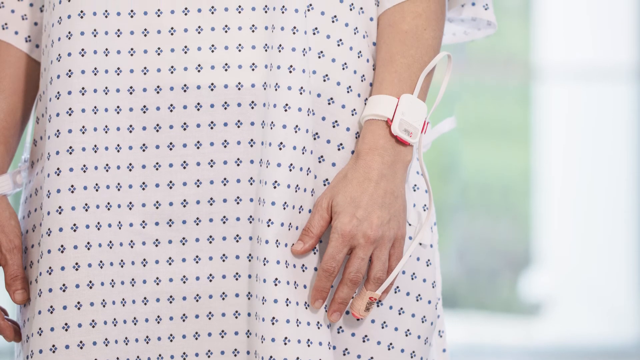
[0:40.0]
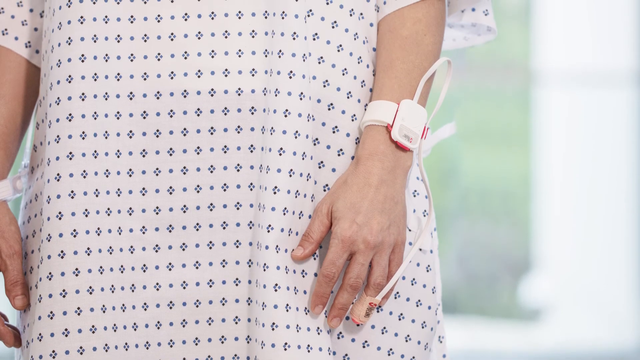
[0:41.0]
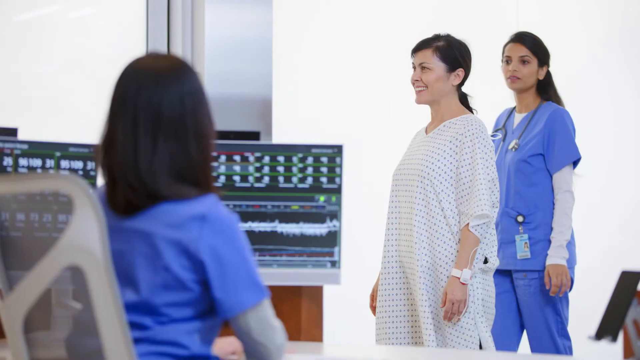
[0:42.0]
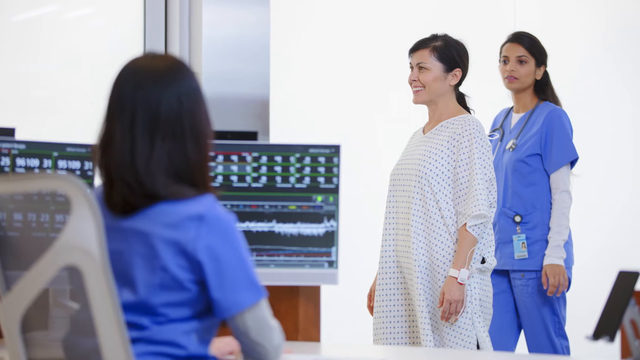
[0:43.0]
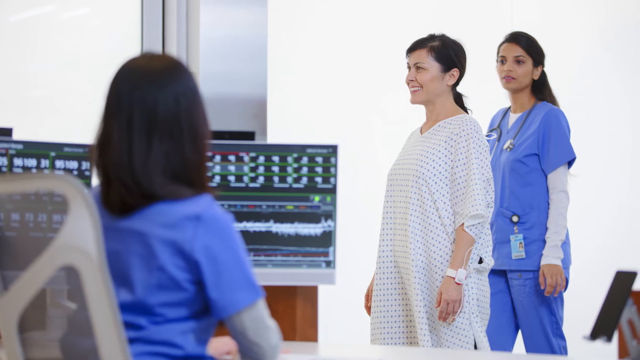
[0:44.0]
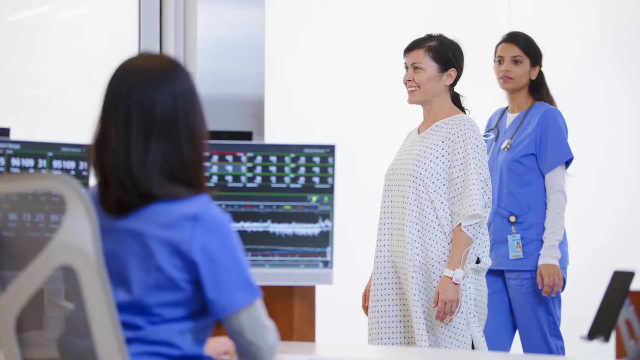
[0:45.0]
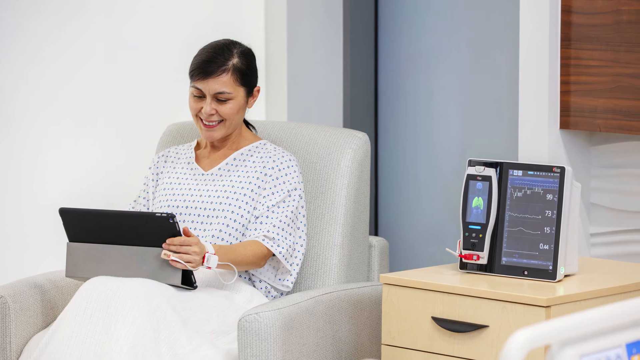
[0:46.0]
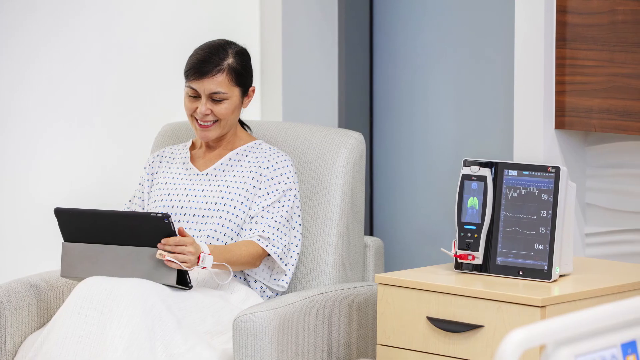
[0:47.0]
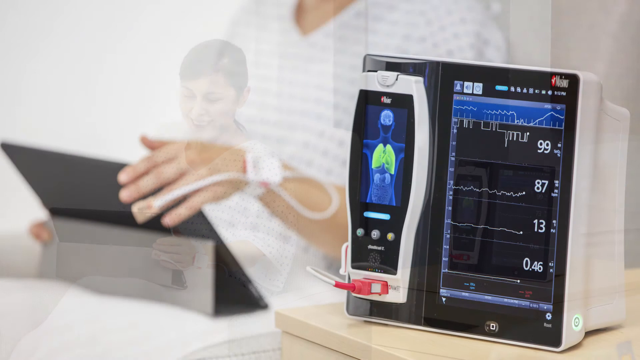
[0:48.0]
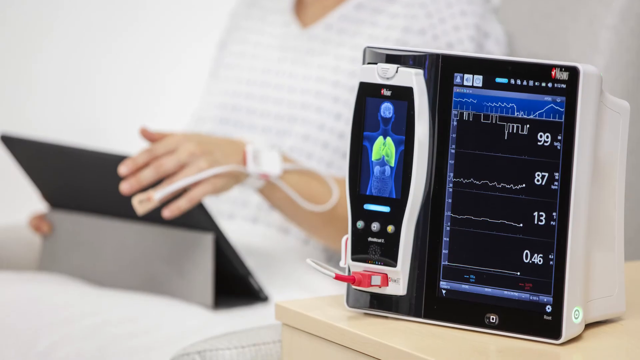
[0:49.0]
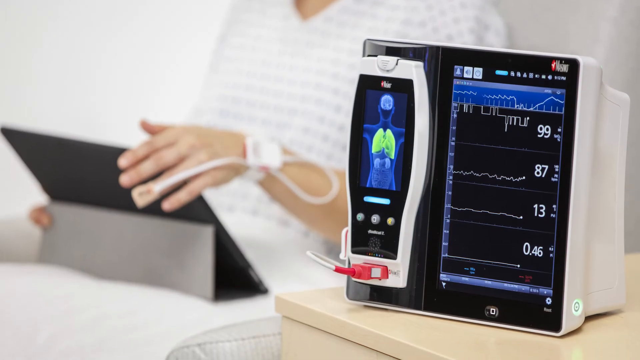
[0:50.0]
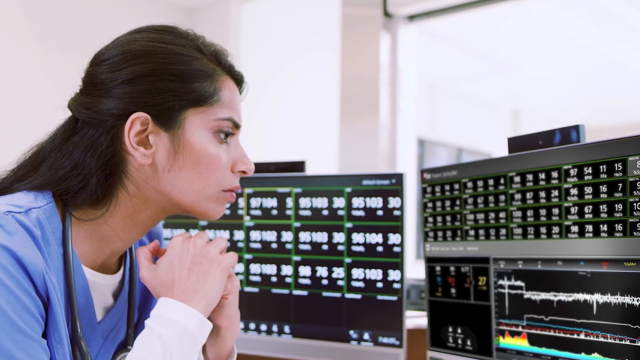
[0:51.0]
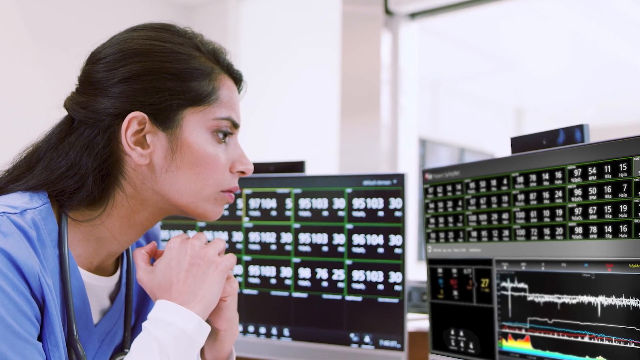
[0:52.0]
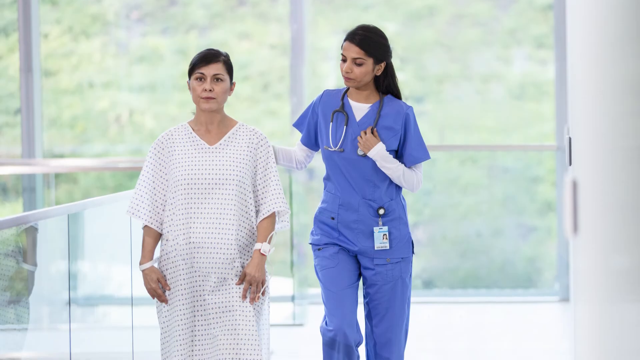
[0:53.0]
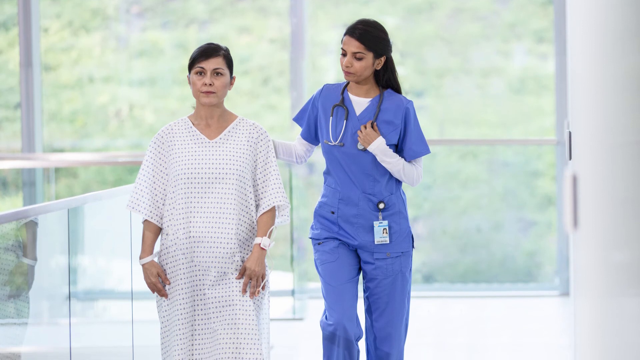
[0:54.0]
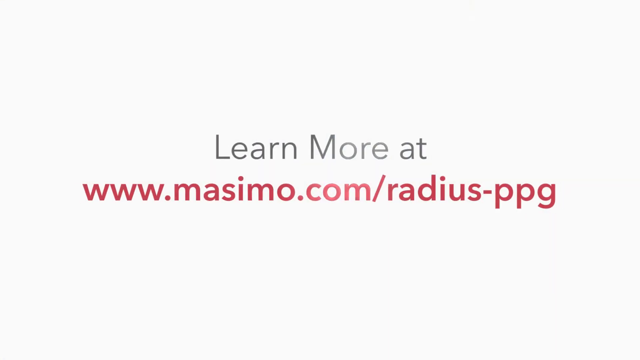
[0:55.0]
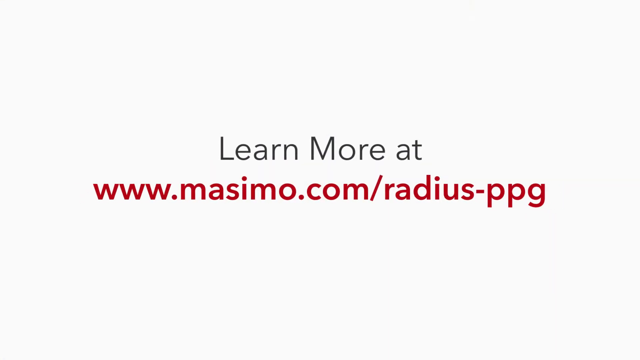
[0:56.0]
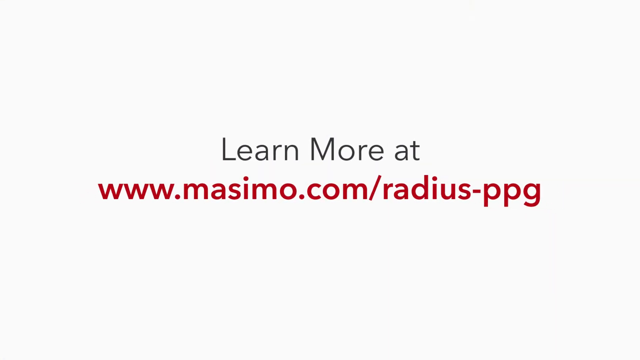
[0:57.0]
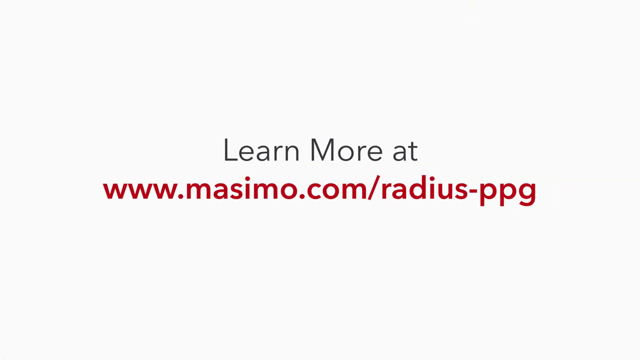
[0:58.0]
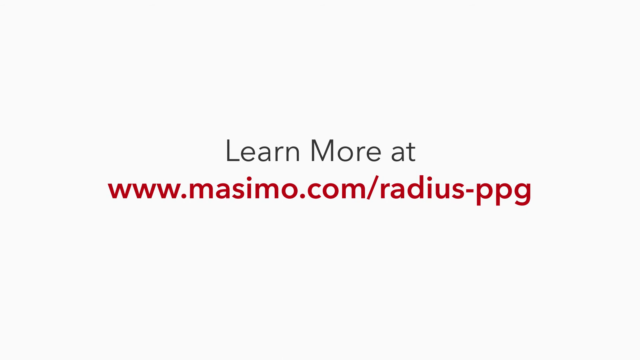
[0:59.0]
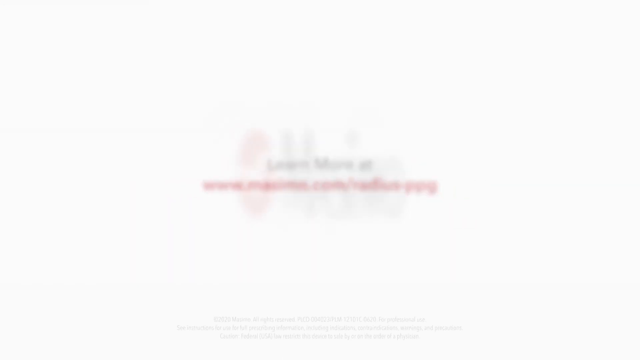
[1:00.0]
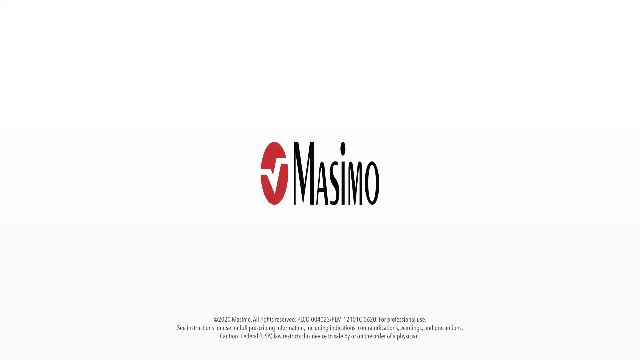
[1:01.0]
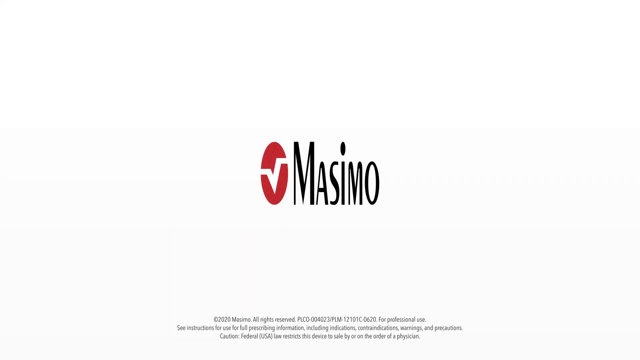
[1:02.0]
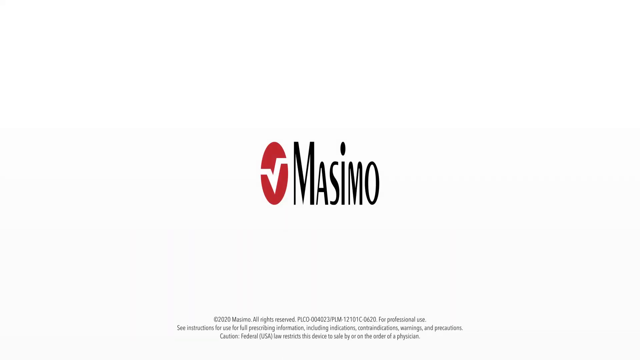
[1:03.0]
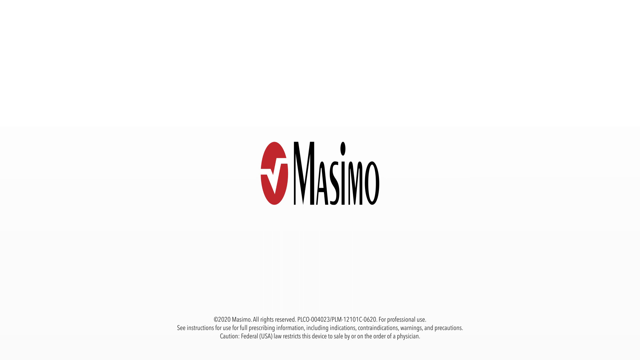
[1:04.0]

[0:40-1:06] A person who seems to be a hospital patient wears a white gown with little black designs on it. A white monitor is attached to the left wrist, and a wire runs from the monitor to the left ring finger, with a bandage holding it together. The patient looks towards the left side of the screen, with a nurse in blue scrubs behind, while another nurse, also in blue scrubs, sits in the foreground looking at a screen, with two monitors in front of her. The patient then sits on a gray chair and seems to be holding up a tablet, while a monitor is sitting on a drawer; the monitor is still attached to her left wrist. A close-up of the monitor on the drawer shows a blue human silhouette with the lungs highlighted in green and, on the right side, three line charts with some numbers next to them. Finally, a nurse looks at a monitor in front of her.